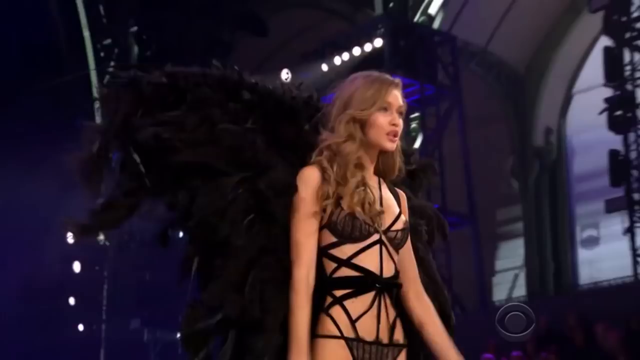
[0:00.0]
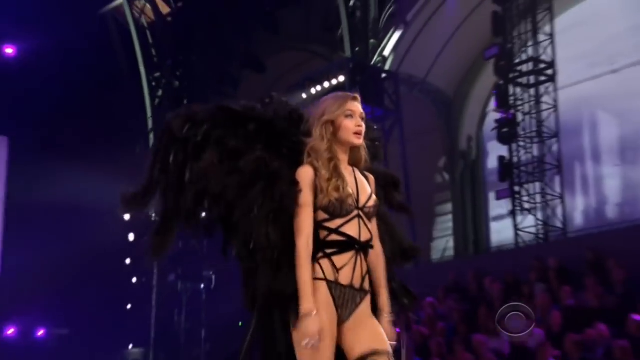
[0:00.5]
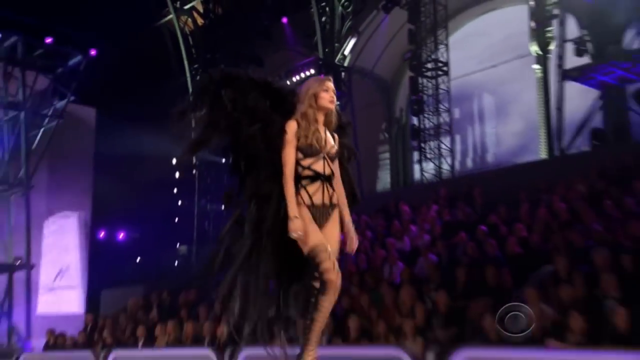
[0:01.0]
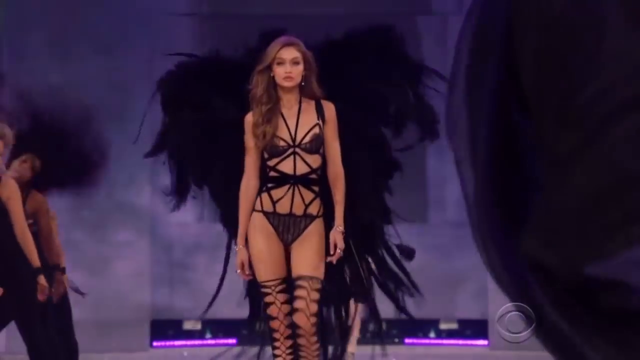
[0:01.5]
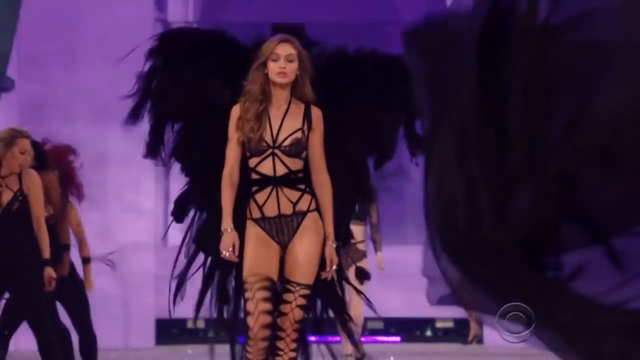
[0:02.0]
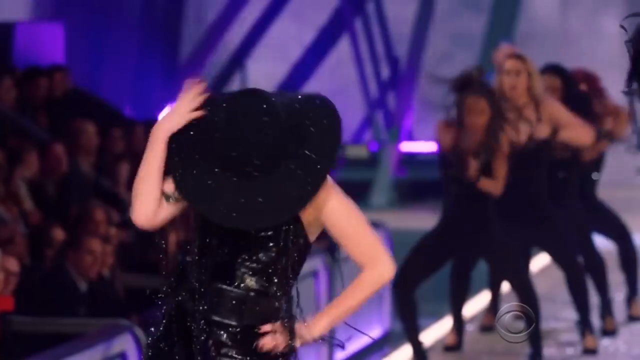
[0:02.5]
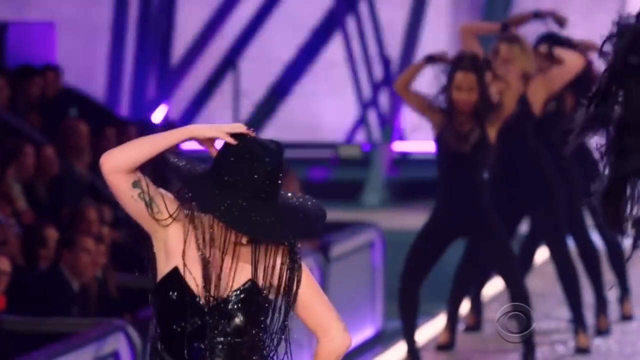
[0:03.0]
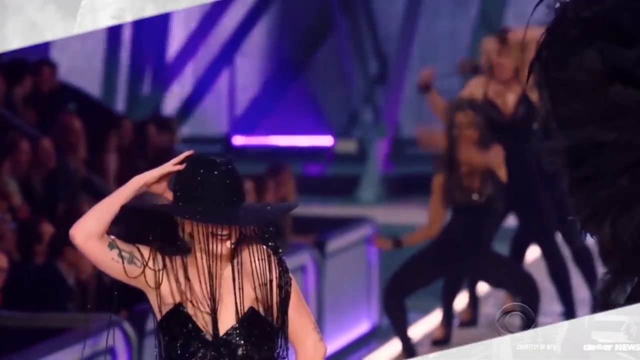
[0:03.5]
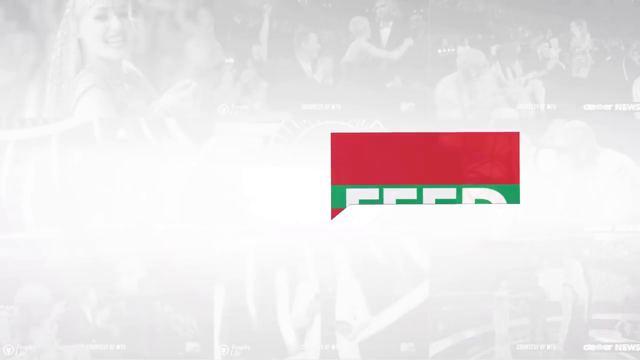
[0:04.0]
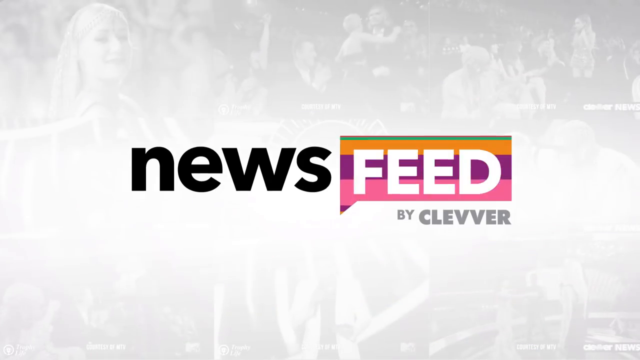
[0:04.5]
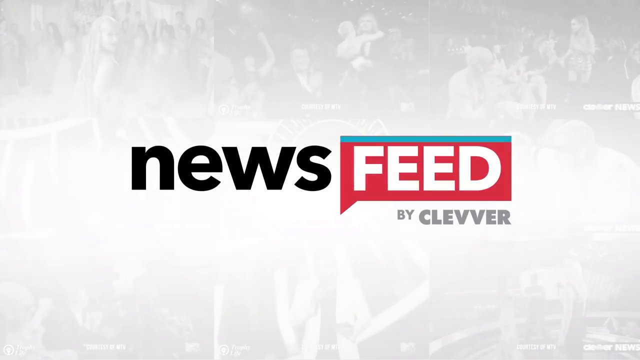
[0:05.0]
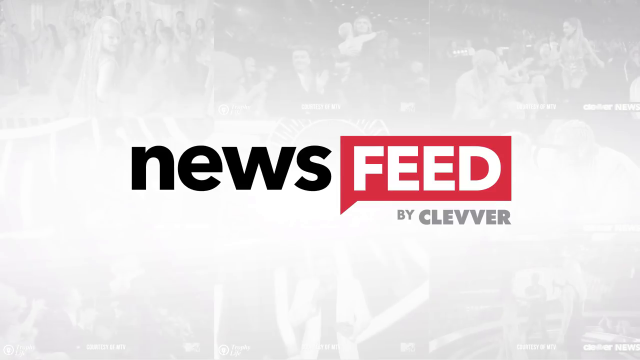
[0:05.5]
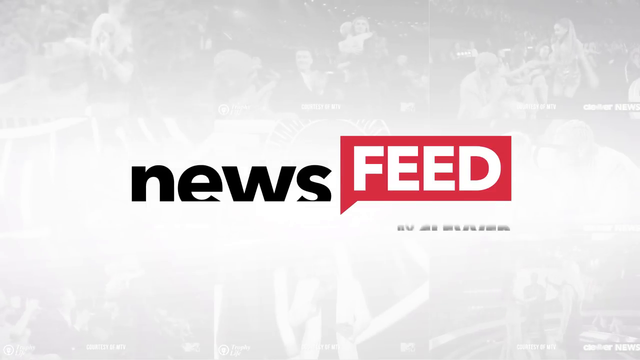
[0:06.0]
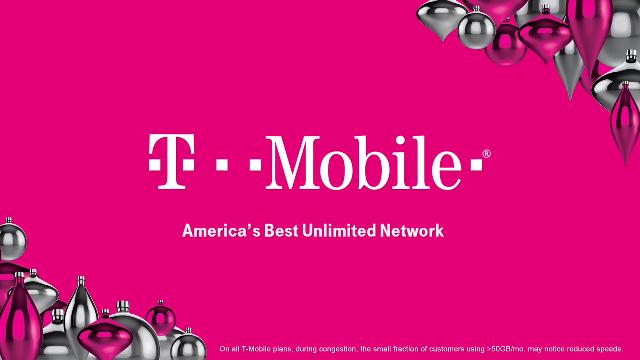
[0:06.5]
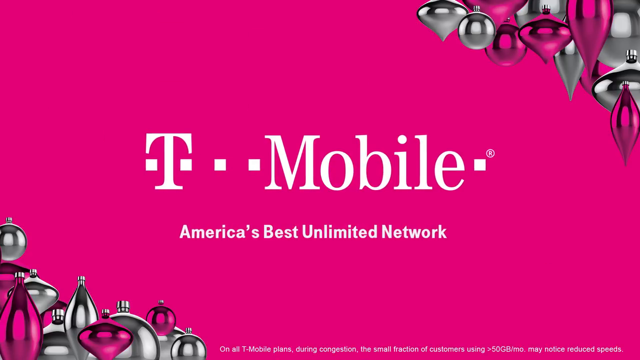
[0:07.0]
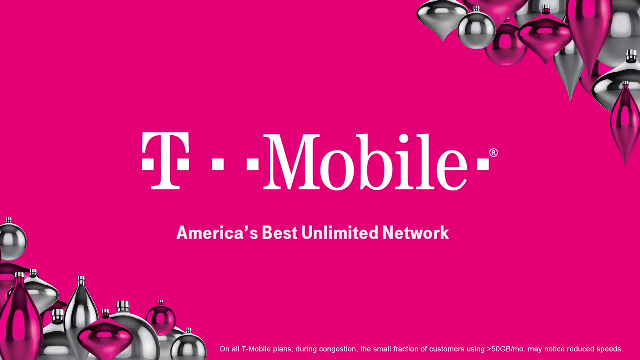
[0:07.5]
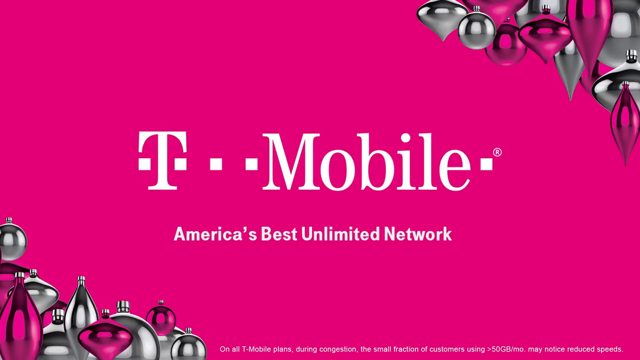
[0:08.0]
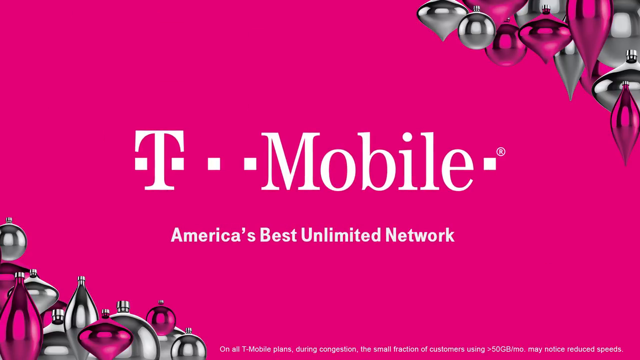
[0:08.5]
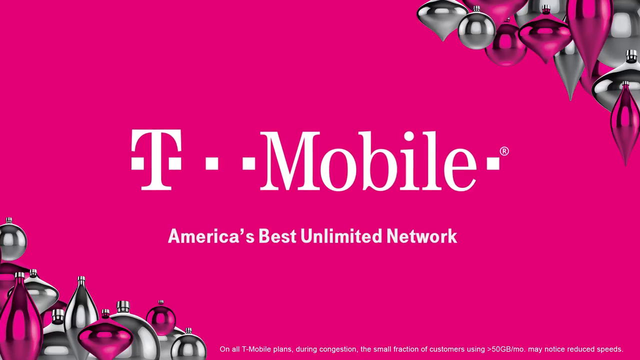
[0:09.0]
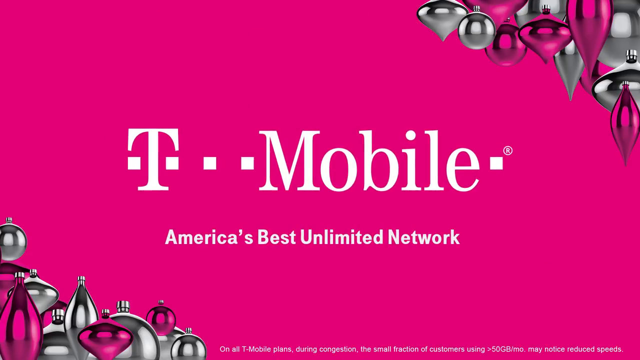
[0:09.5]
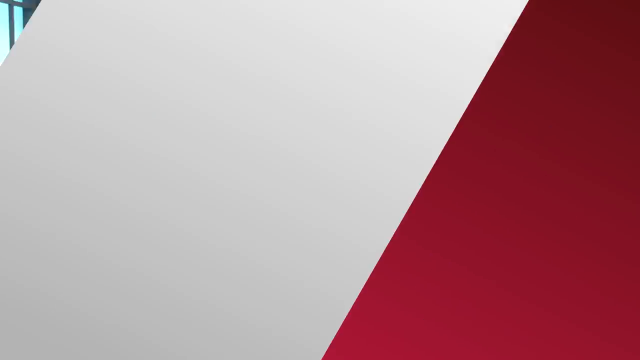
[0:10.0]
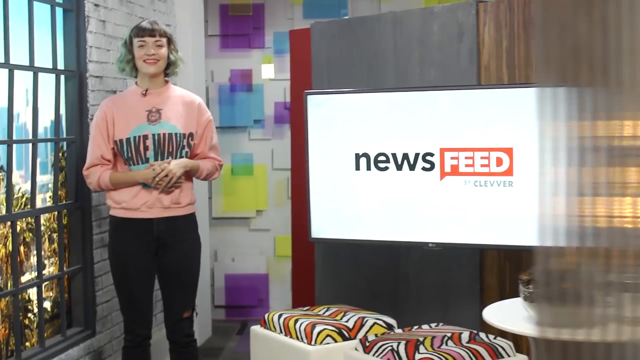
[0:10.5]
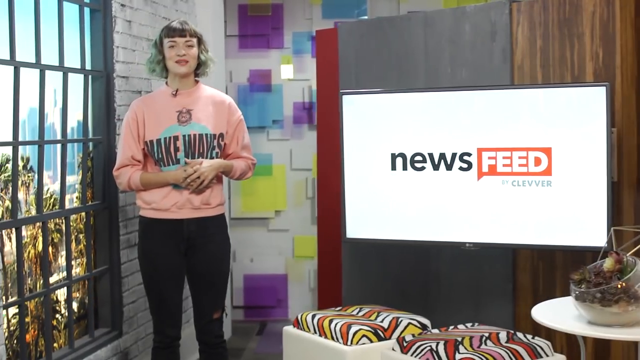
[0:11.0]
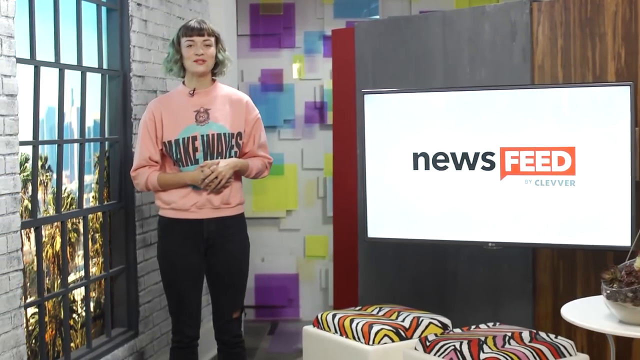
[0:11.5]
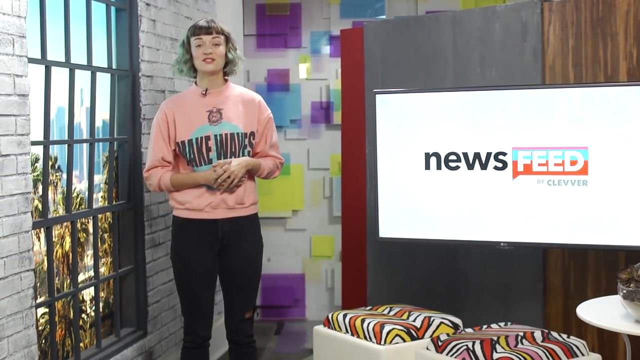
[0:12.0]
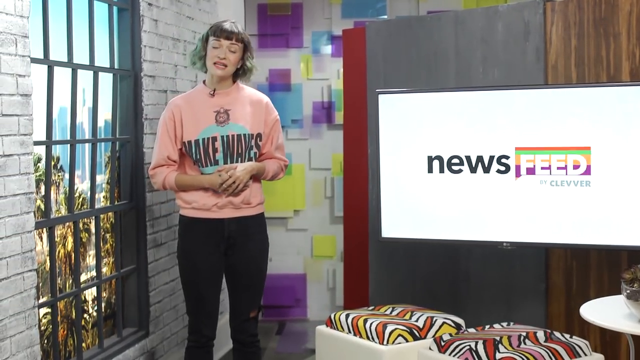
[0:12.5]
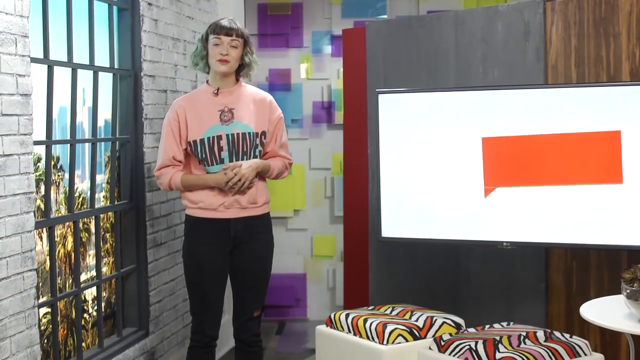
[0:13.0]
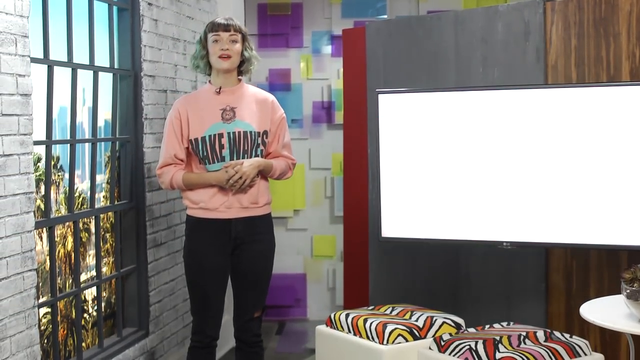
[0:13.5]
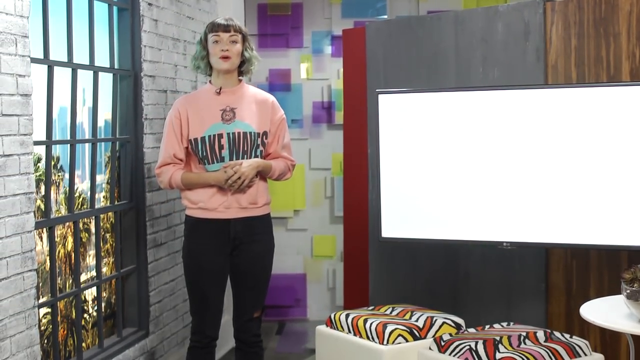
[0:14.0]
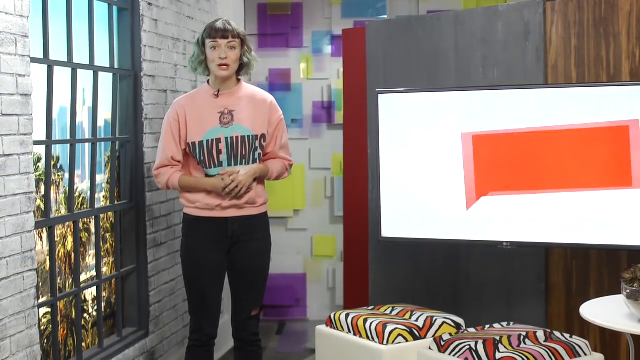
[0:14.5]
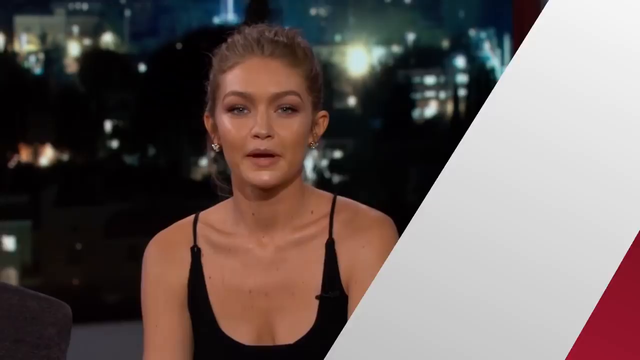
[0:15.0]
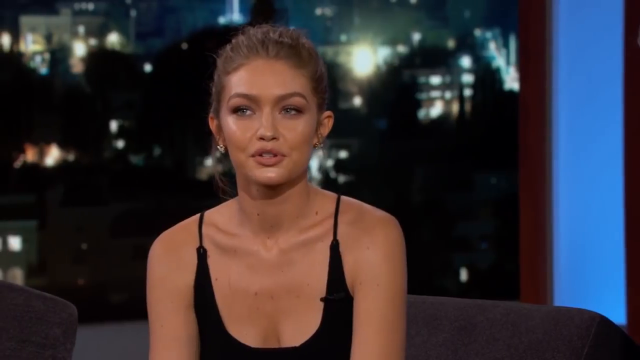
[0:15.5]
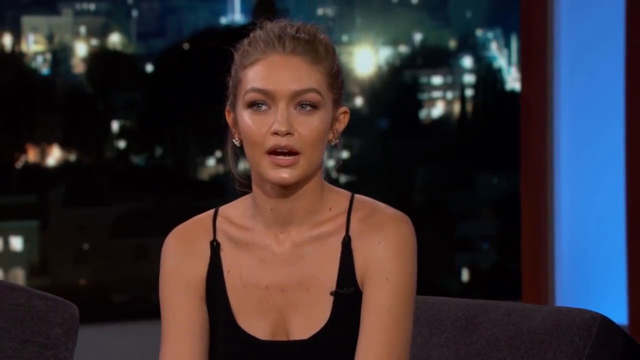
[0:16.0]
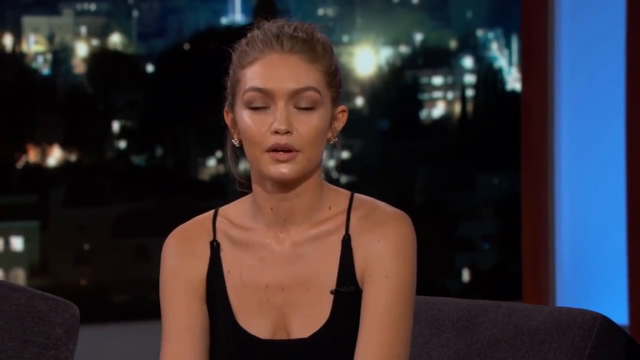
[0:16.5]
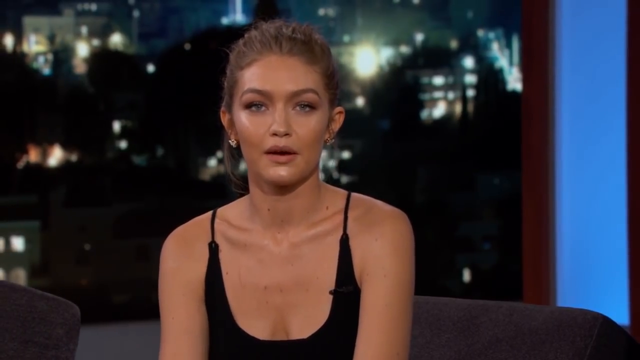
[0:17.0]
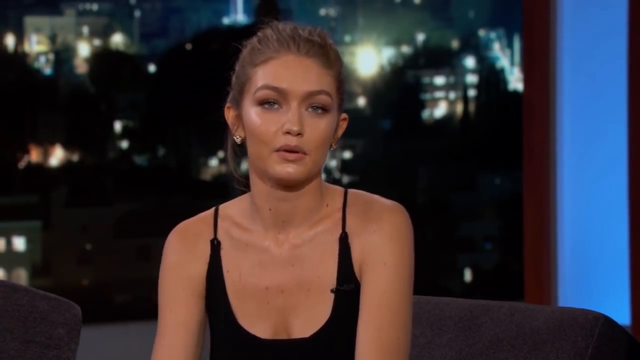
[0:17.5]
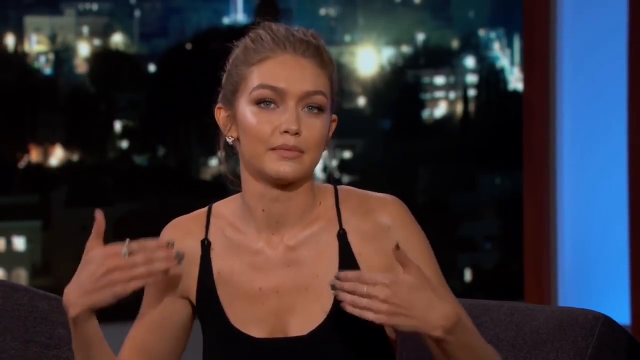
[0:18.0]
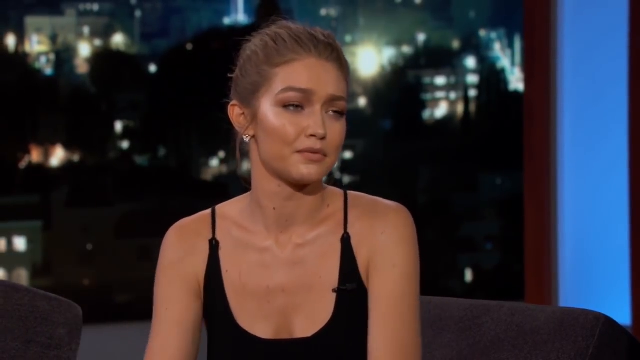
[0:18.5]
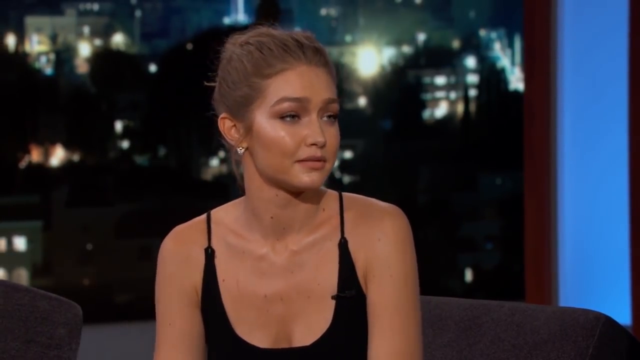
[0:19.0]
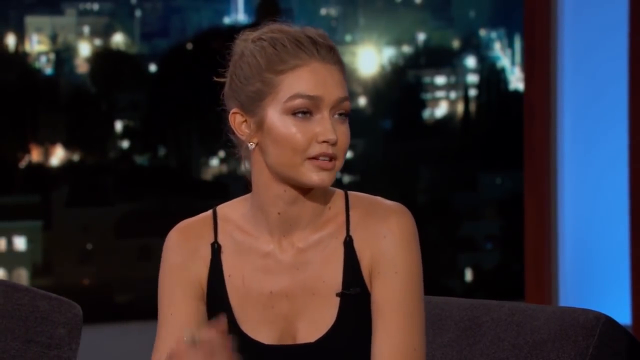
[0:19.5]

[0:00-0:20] A female model with long, curly brown hair that comes past her shoulders walks down a pathway. Her clothing is mostly just black strings that barely cover her body. She walks back and forth, swinging her arms and legs quite a bit, taking long strides. The camera zooms out, revealing people on the back side of the walkway. A shot from the front shows her walking forward with her hands hanging down and people on her left side. Another shot shows a group of women dressed in black outfits raising their hands up and down; one person in the bottom left wears a black hat with black strings hanging down. This gives way to a screen with a white background that has people in it, with text in front reading "News Feed by C-L-E-V-E-R". "Feed" is in white over a background of pink, turquoise and orange lines, and the background then transitions to solid red. A T-Mobile advertisement follows on a pink background, with "T-Mobile, America's best unlimited network" in the middle and shiny silver and pink Christmas decorations in the upper right and bottom left corners. The T-Mobile logo moves forward. Next, a woman stands on the left side wearing a light pink long-sleeved sweatshirt with "wake waves" across the front and black pants. She is smiling, has short hair that comes to the middle of her neck, and holds her hands clasped in front of her stomach. On the right is a big screen with a white background reading "news feed by c-l-e-v-e-e-r". The camera pans toward the left so the woman is in the center; she talks and nods her head a little but mostly stands still. The video then cuts to an interview with a brown-skinned woman in an outfit with just straps over her shoulders, who shrugs a little, raises her hands and puts them back down.